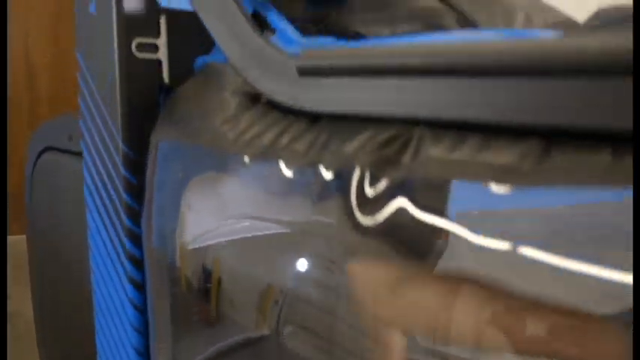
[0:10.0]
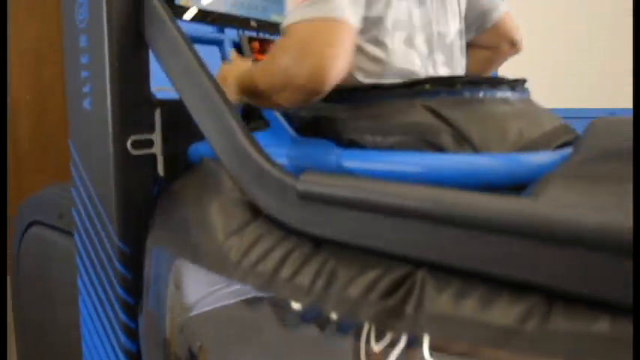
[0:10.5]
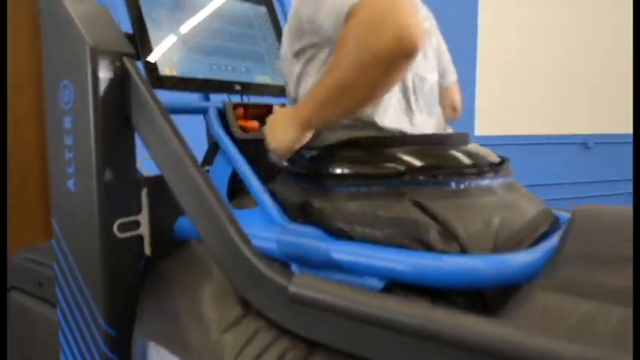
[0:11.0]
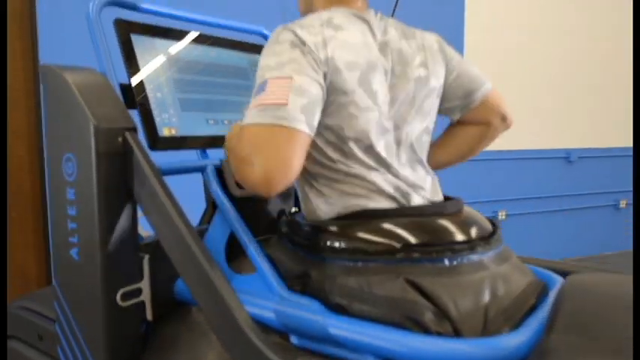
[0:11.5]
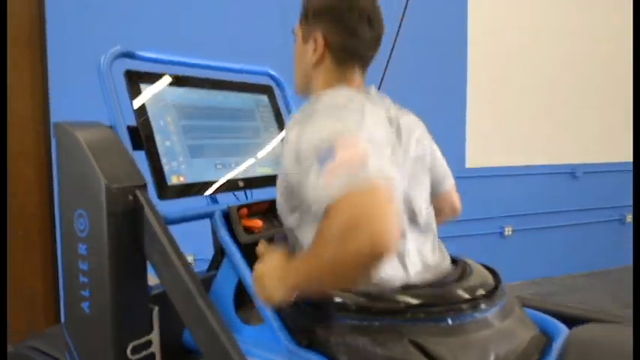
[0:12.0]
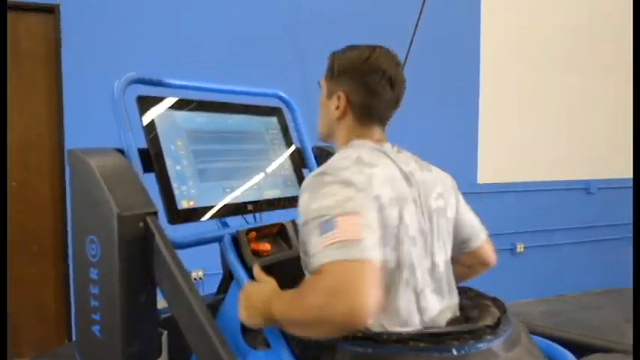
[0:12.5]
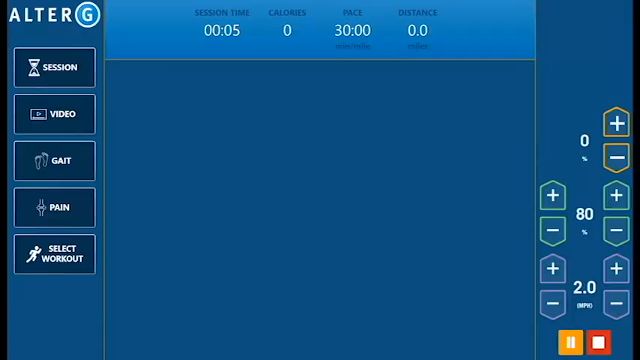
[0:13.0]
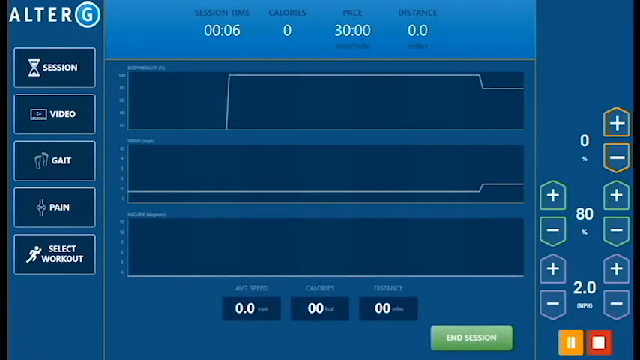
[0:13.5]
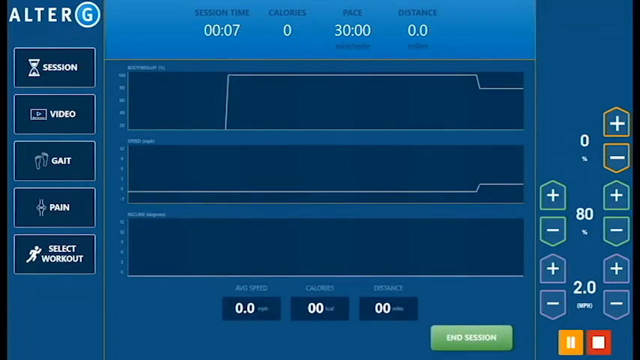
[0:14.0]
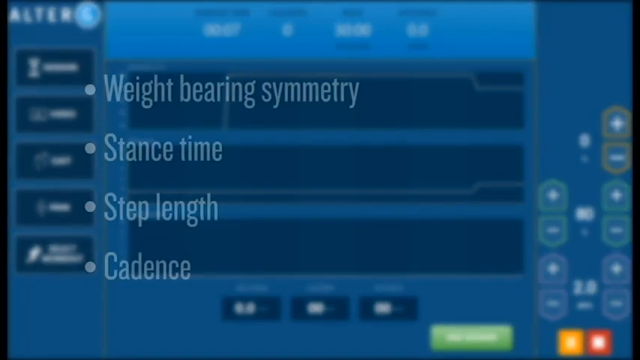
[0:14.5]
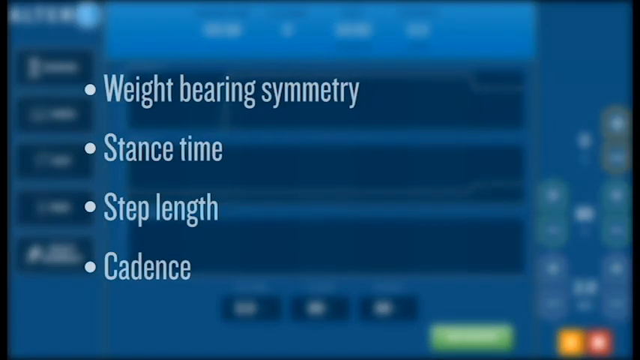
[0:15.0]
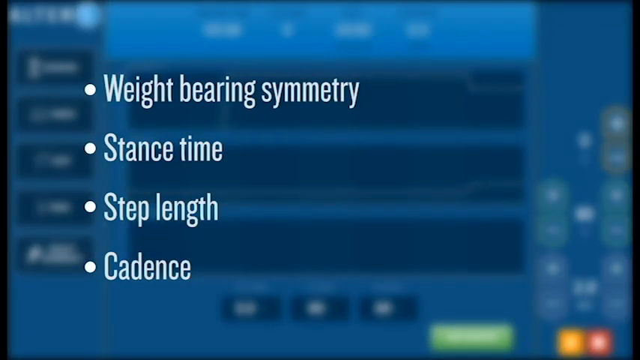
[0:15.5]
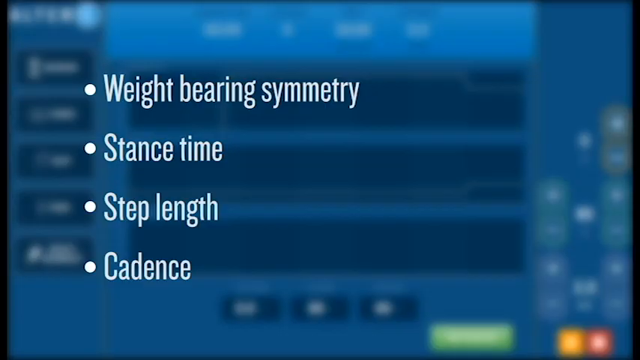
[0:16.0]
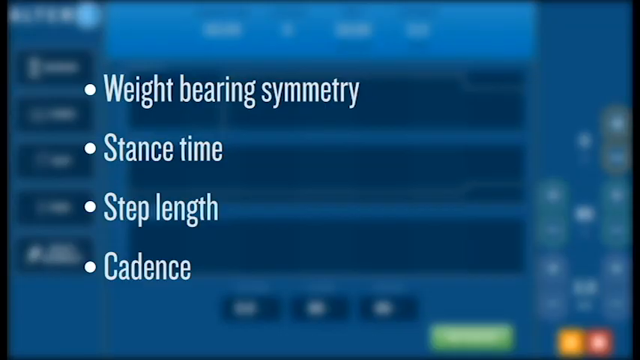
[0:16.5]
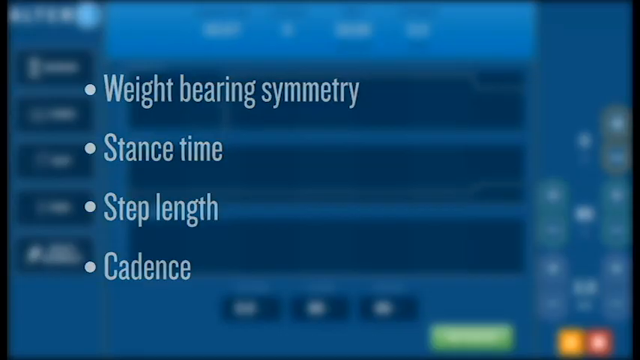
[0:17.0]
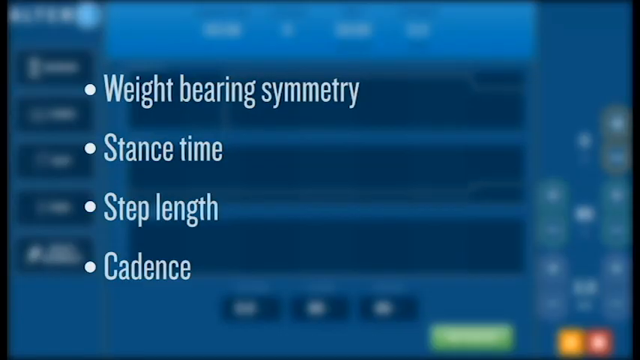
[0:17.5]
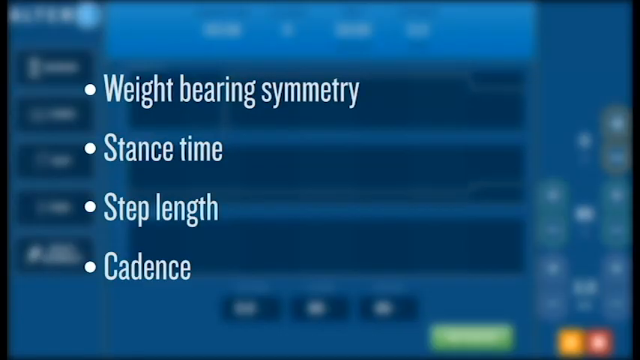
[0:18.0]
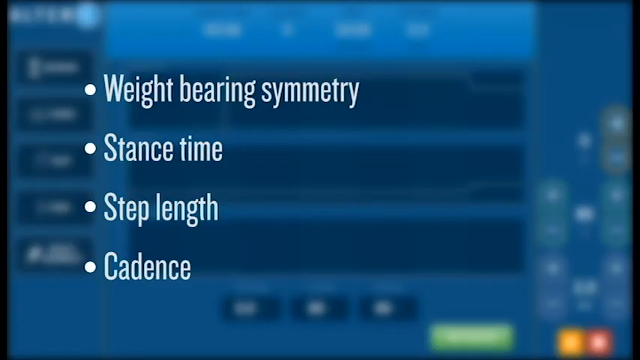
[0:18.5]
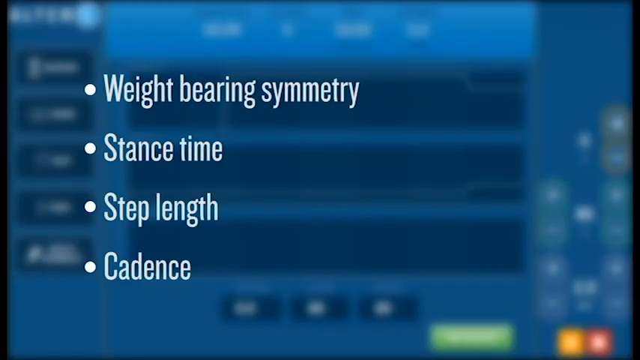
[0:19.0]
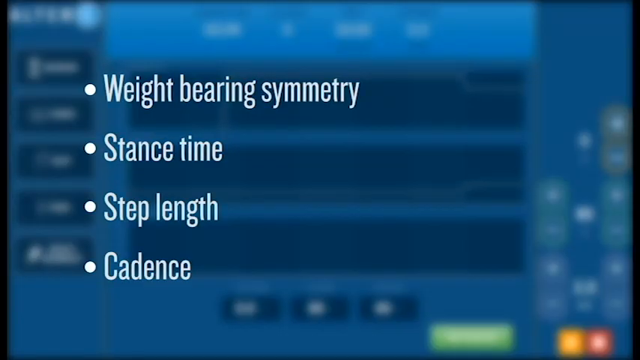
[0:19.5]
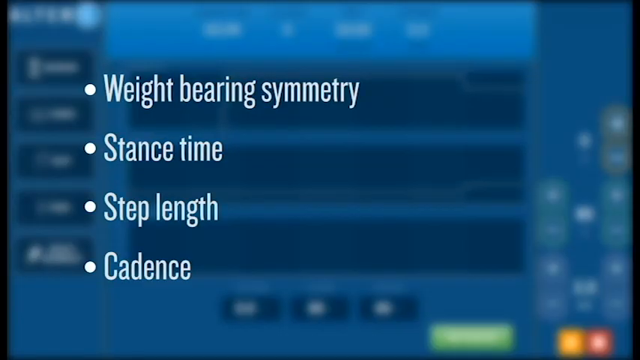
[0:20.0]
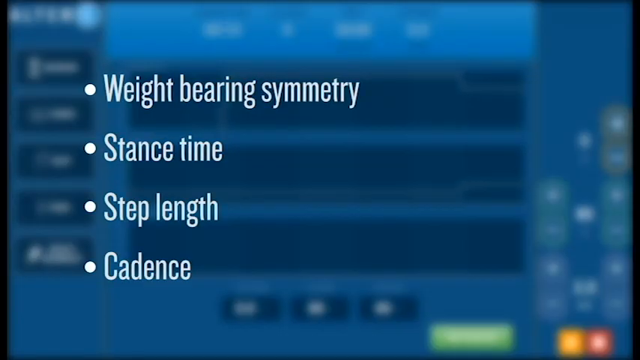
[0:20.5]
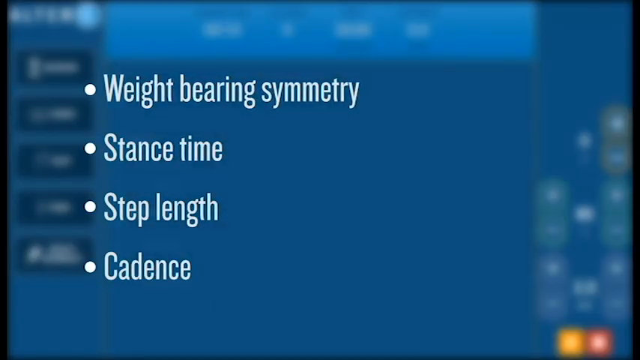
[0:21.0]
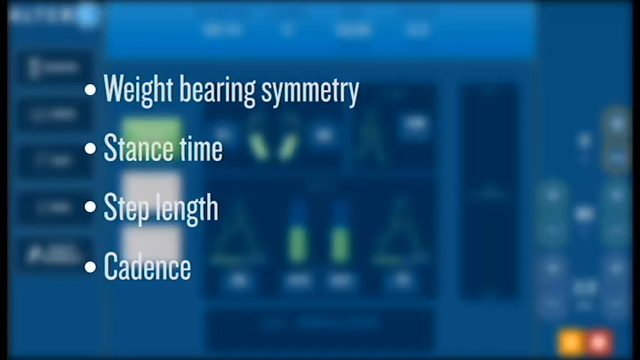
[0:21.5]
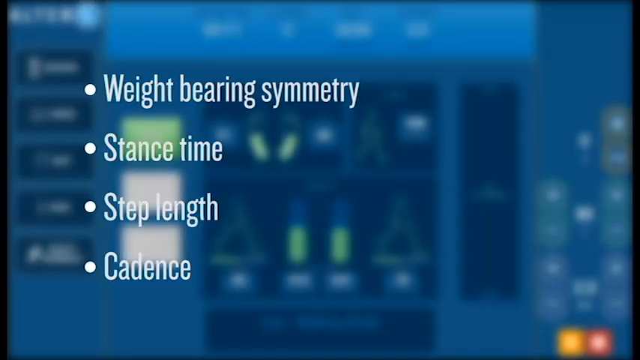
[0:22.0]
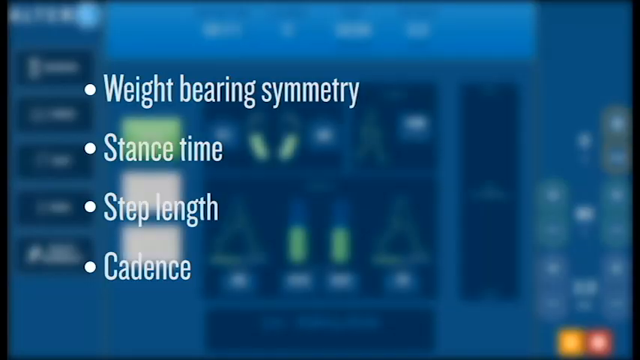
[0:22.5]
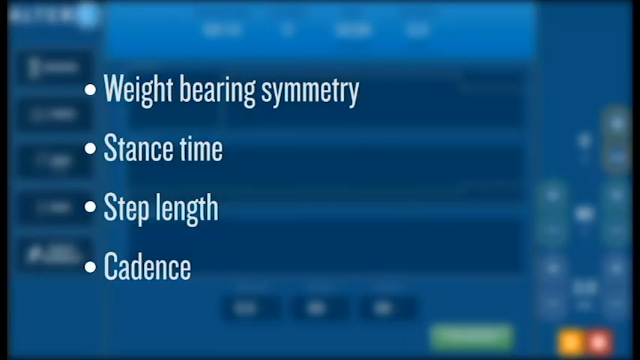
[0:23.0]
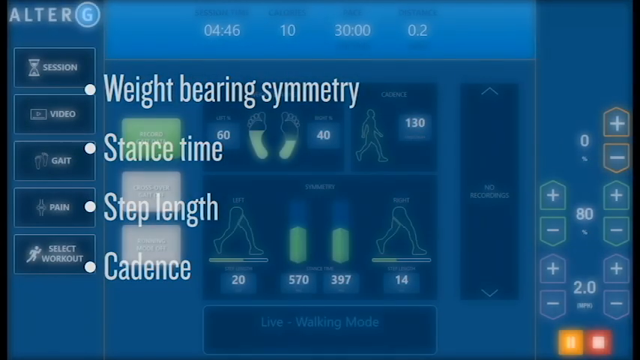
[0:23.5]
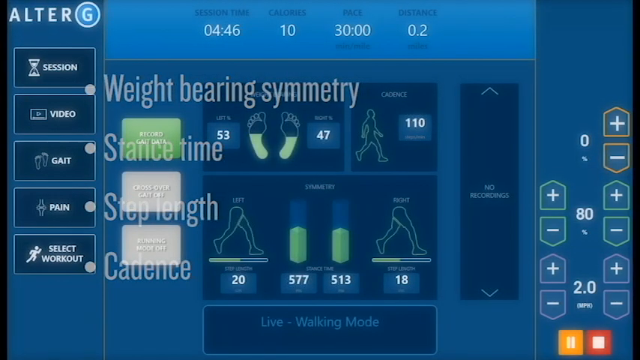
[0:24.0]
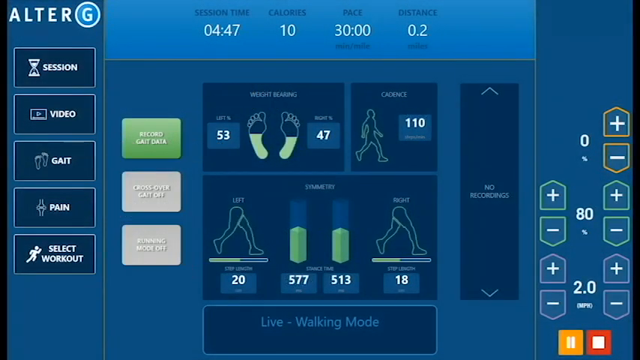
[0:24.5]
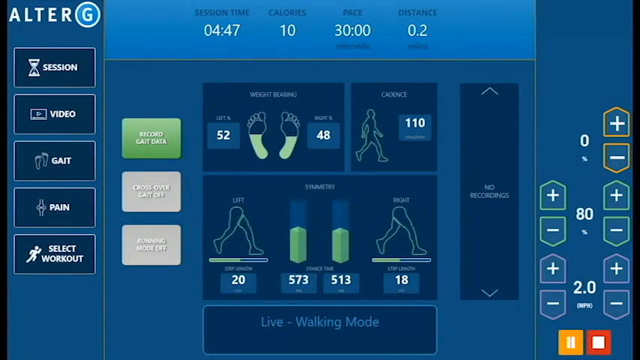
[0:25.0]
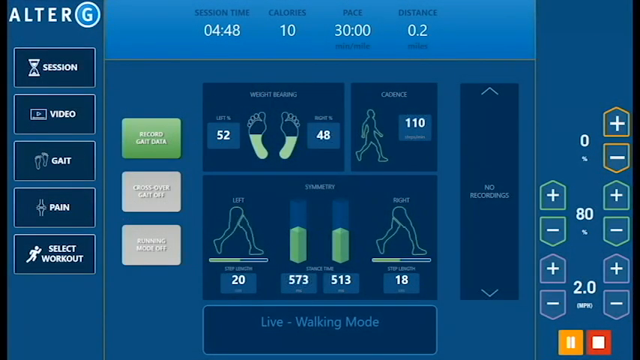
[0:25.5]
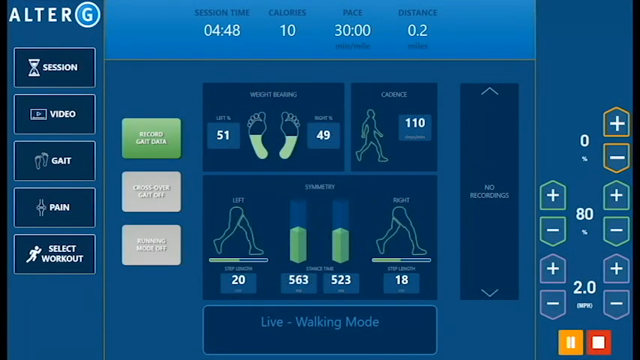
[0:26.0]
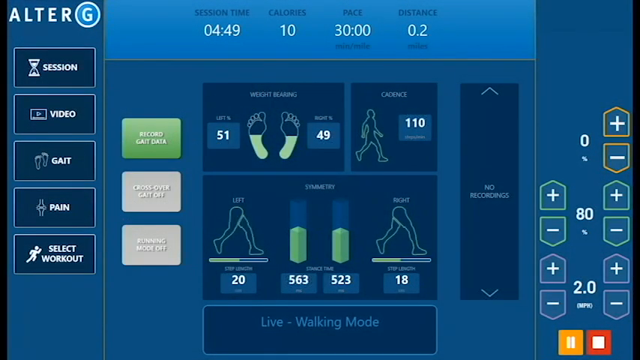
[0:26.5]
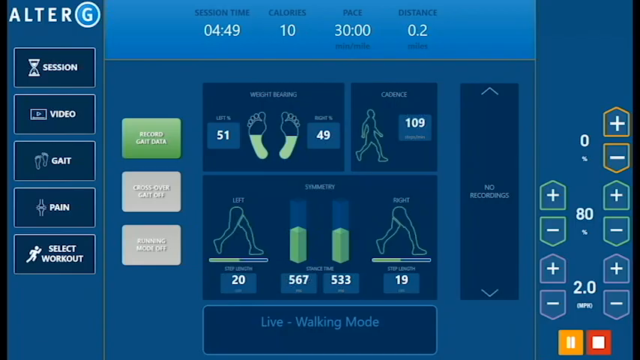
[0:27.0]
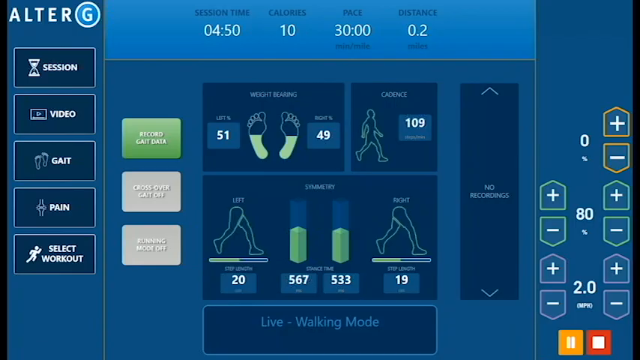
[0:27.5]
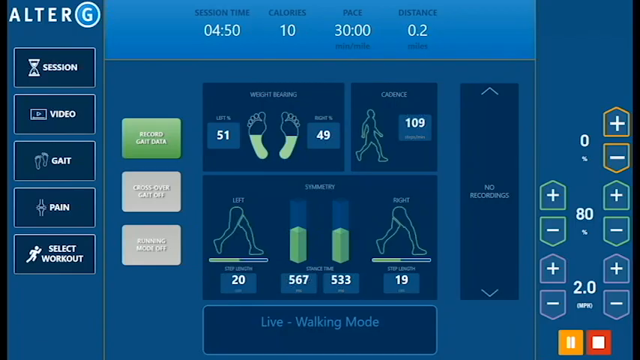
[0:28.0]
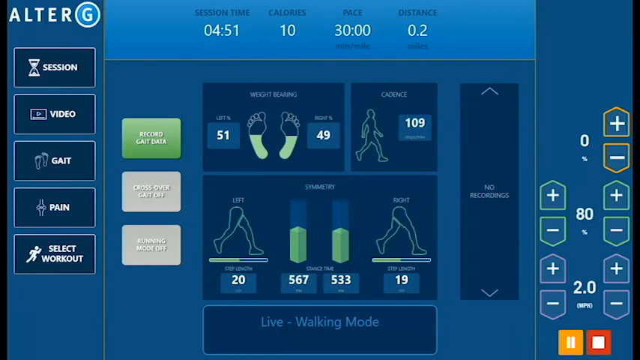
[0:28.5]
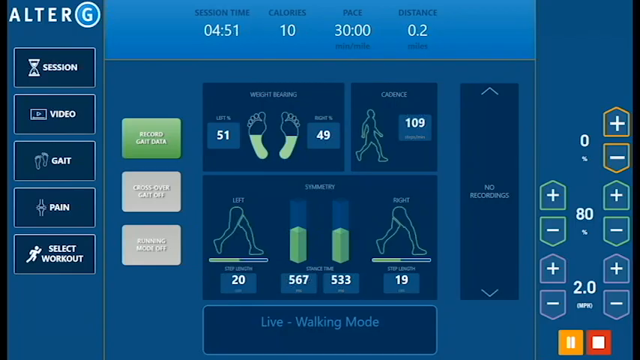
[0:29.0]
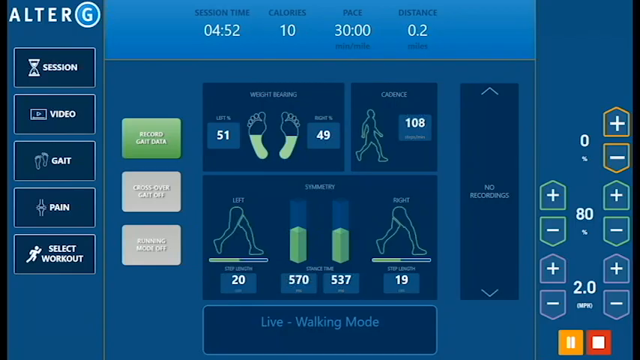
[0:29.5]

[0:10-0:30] A quick upward pan shows a close zoomed-in view of a man jogging on the spot on a fitness treadmill-style device. The treadmill appears to have a covering from the waist down, so his legs and the bottom part of the treadmill are not visible. The video transitions to an LCD monitor-style screen like one found on a treadmill or exercise device. Four bullet points of text appear: "weight-bearing symmetry," "stance time," "step length" and "cadence." The text fades away, revealing the LCD screen with different statistics, including session time, calories, pace and distance. Five navigational buttons are on the left-hand side, and on the right side are more navigational buttons with plus and minus symbols, along with a pause and a stop button. The session time counts upward.